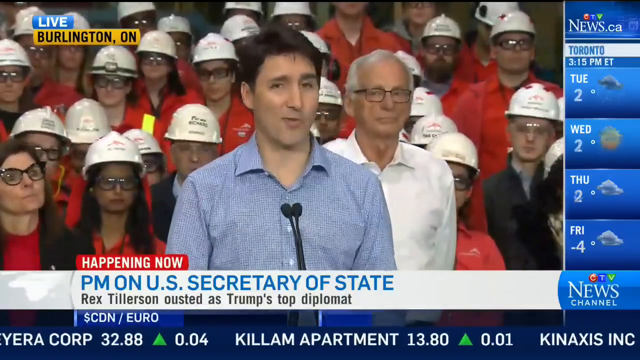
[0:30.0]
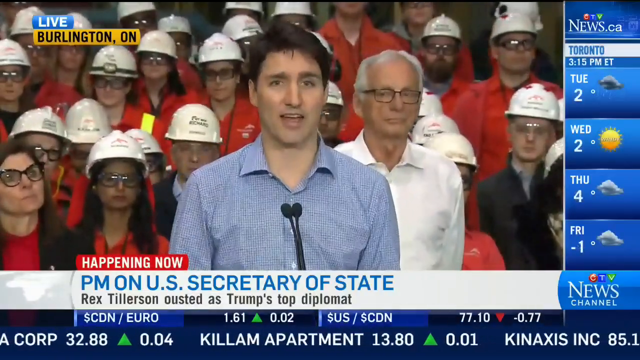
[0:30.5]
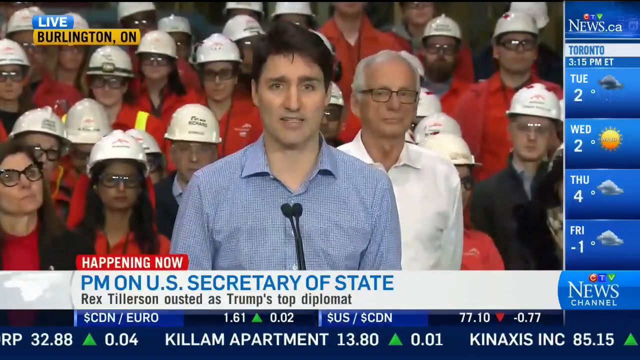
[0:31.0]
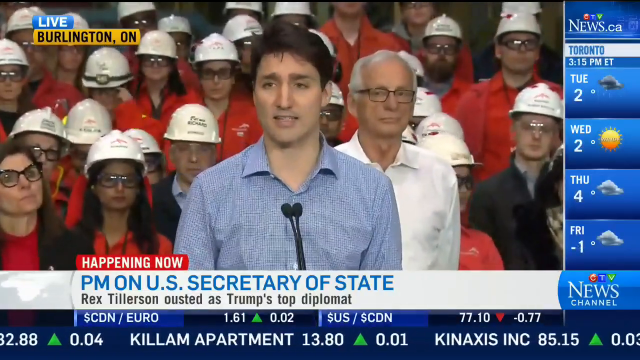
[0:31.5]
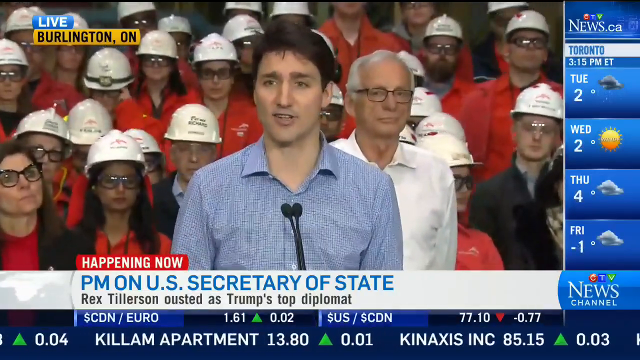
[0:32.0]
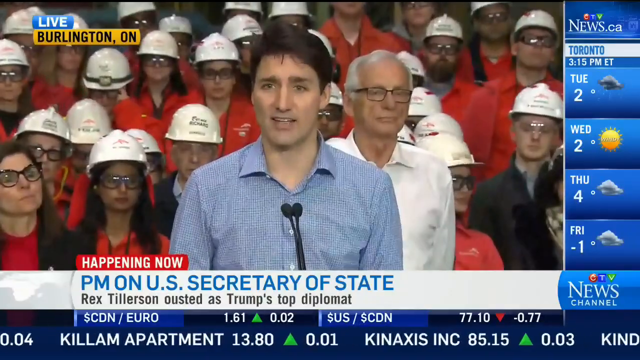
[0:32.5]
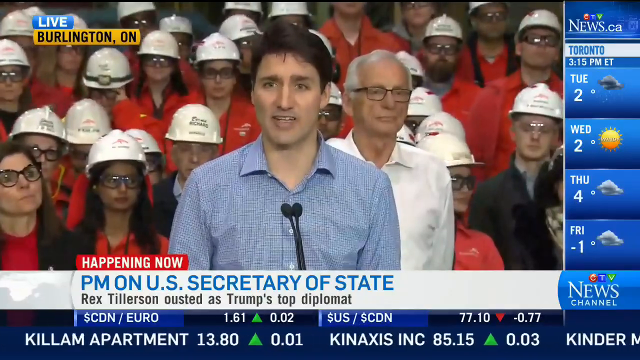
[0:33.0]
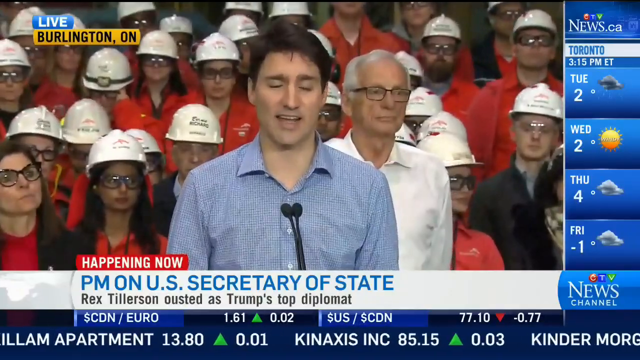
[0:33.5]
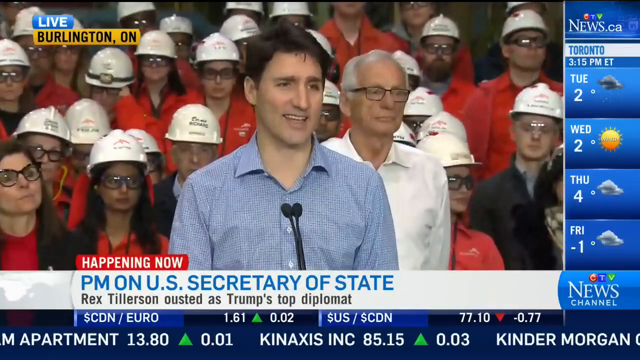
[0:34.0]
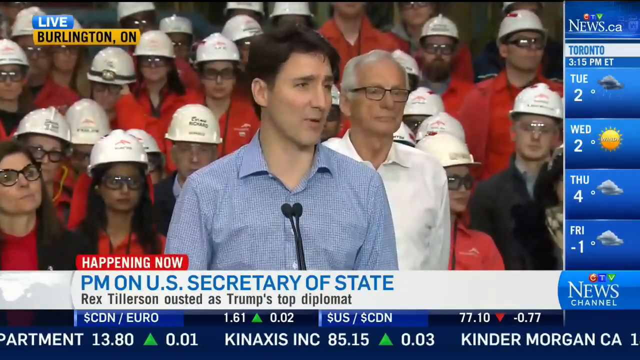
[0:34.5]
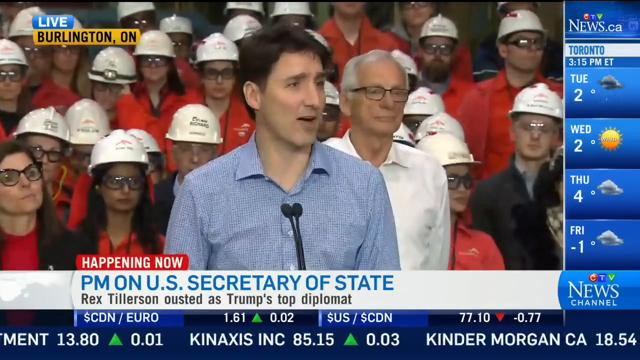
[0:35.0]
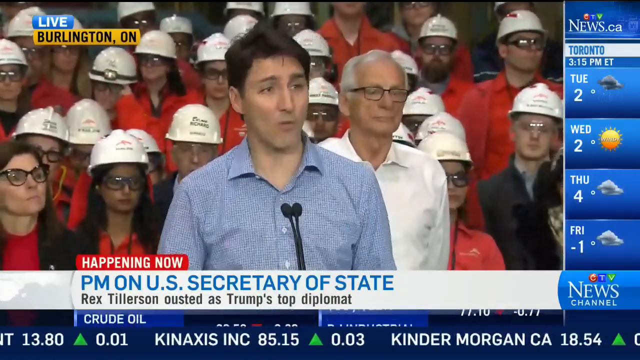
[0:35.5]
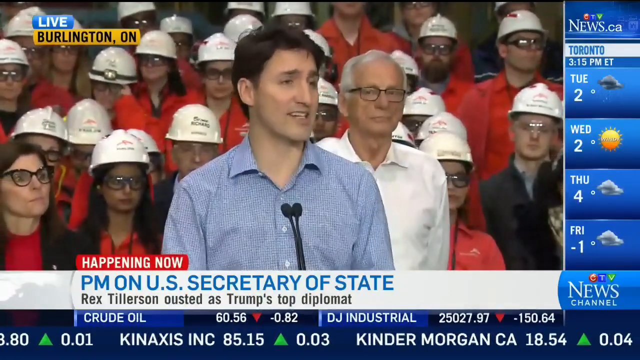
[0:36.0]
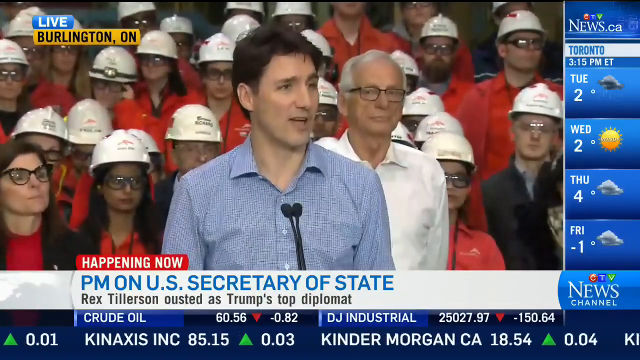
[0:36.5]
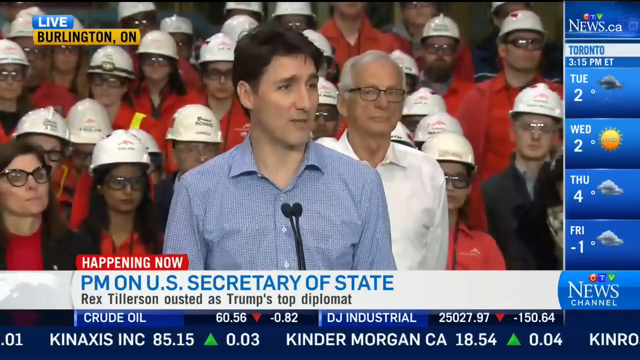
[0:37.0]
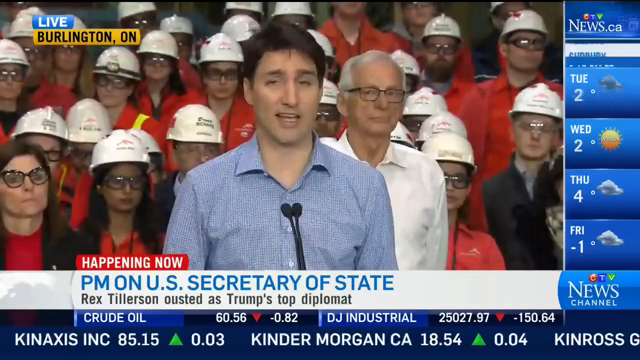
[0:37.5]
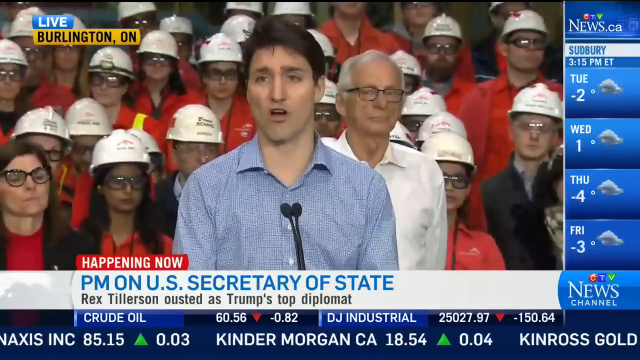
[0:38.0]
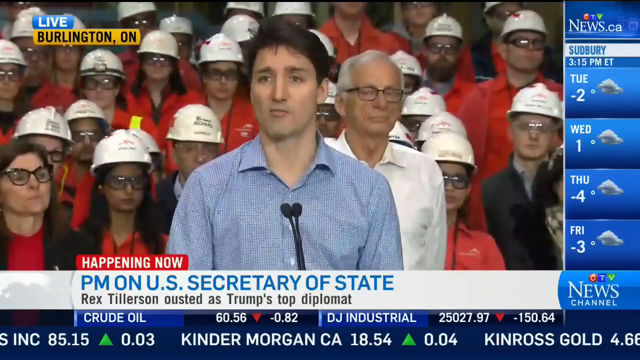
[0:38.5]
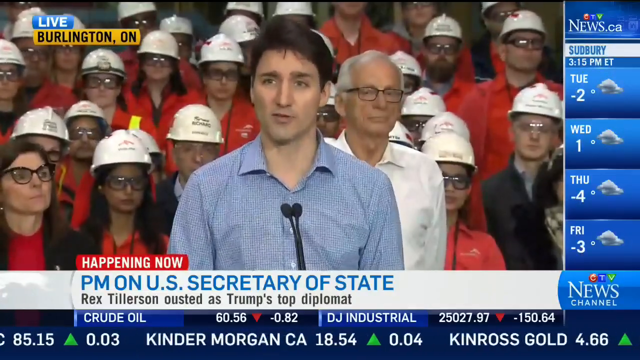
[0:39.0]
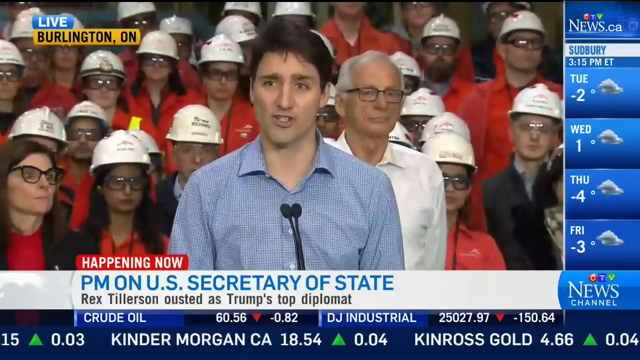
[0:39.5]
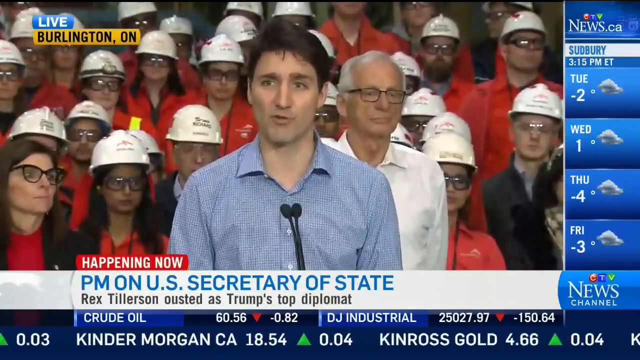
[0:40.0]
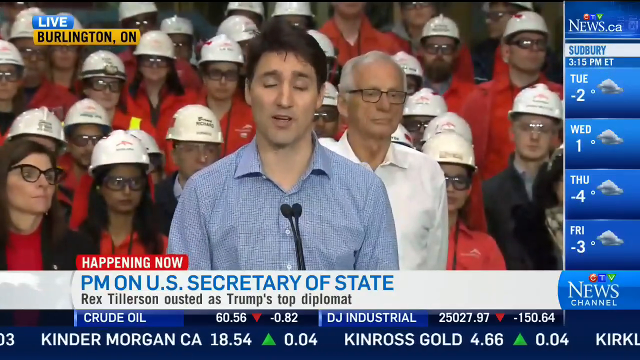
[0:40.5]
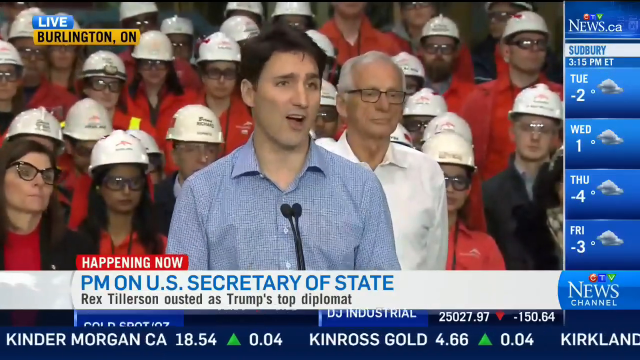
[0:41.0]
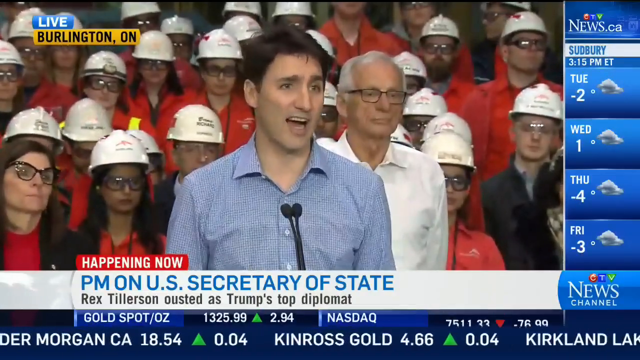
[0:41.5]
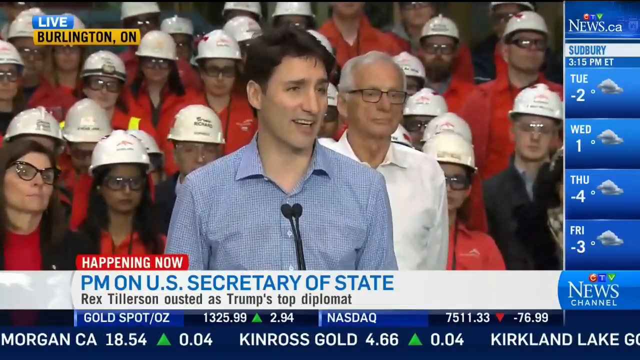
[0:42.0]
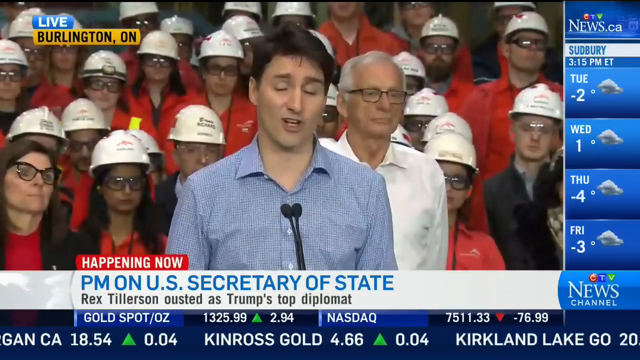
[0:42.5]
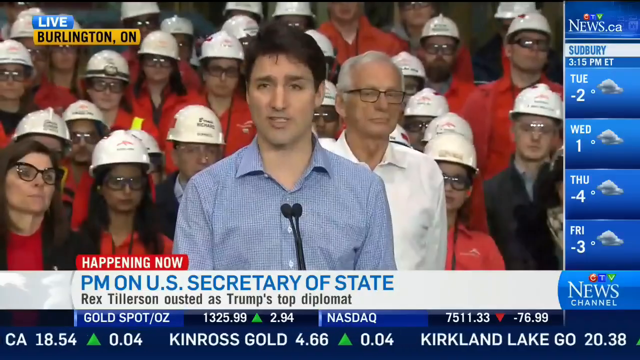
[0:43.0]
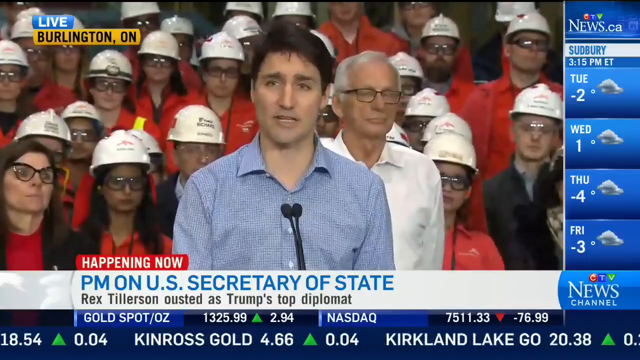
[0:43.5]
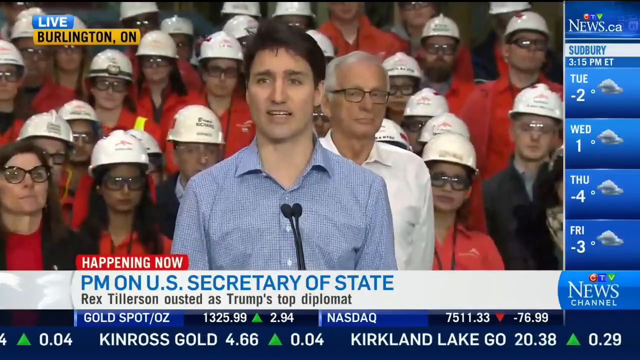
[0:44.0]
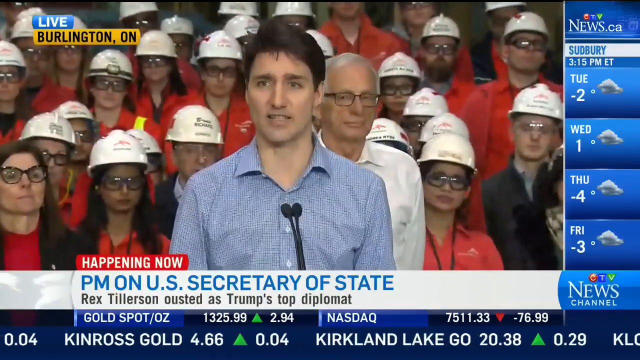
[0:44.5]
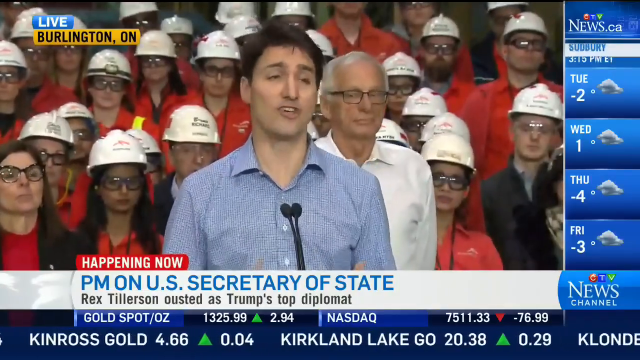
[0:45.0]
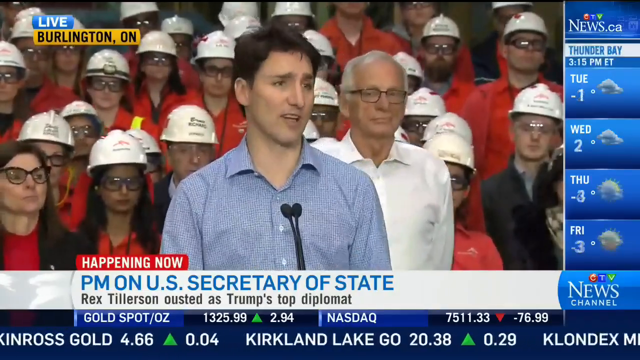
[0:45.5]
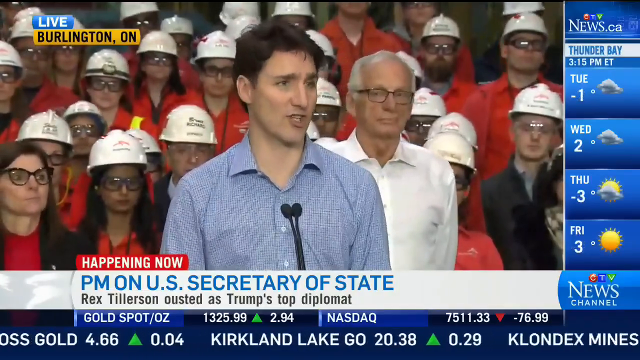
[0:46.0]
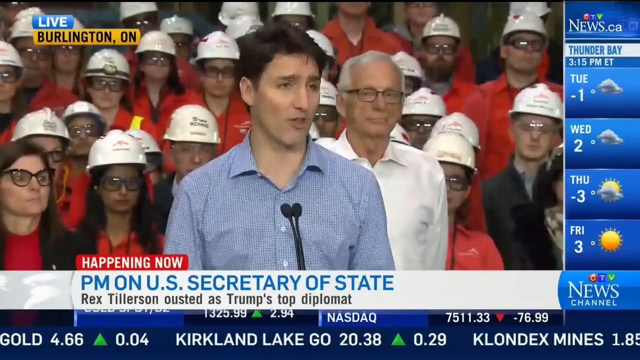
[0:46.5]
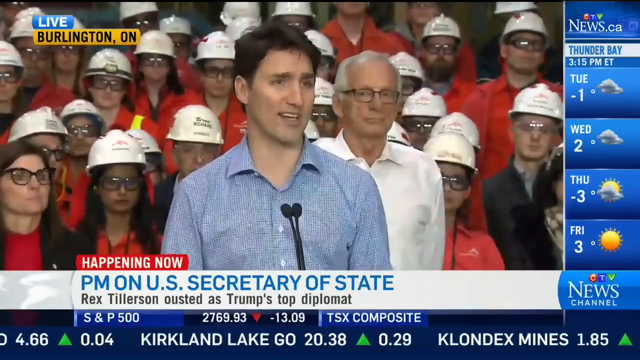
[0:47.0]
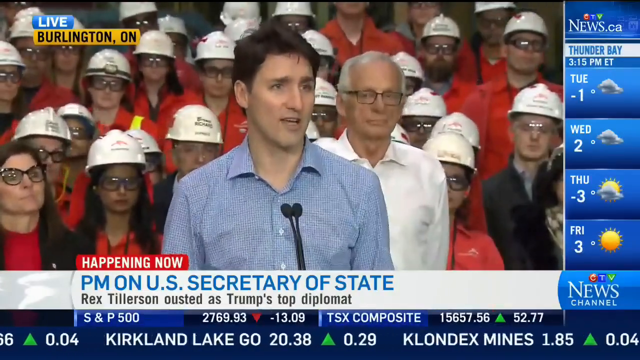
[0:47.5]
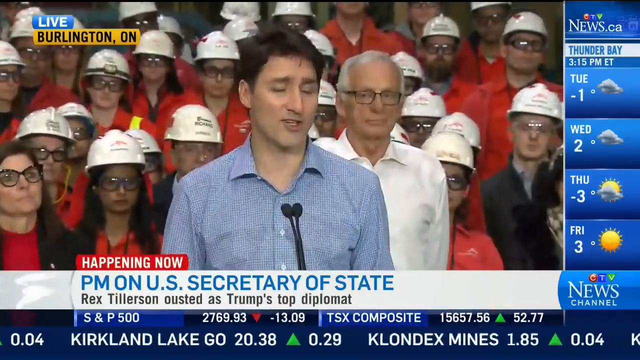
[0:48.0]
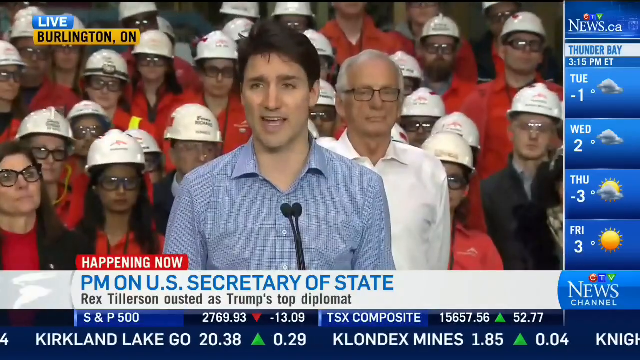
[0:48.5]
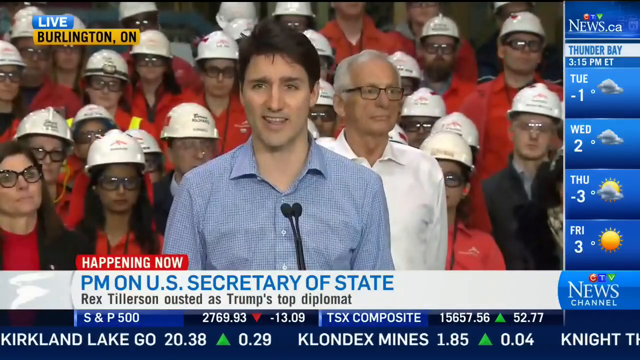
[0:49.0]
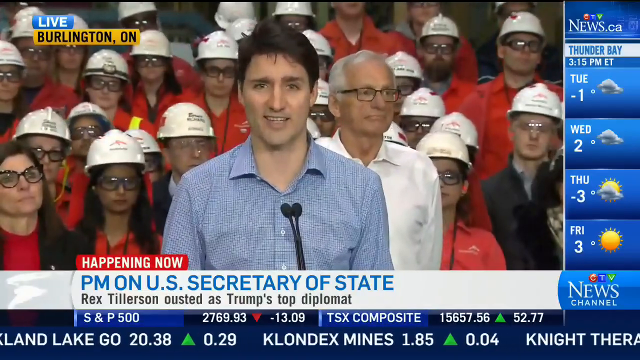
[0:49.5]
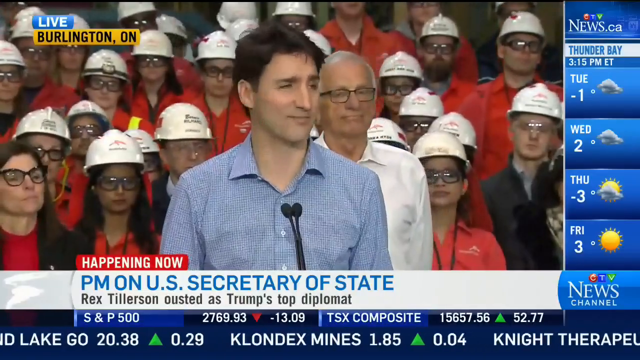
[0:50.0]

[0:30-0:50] The person in front is still talking, and the workers behind him nod their heads, apparently in agreement. The weather on the right side shows Thunder Bay: Tuesday minus 1 degrees, Wednesday 2 degrees, Thursday minus 3 degrees, Friday 3 degrees. This is the CCTV News Channel. As the man keeps talking, flashes go off, possibly from reporters taking pictures and videos of the event. The weather for Montreal is also shown: Tuesday 1 degree, Wednesday 1 degree, Thursday 2 degrees, Friday minus 3 degrees. The workers stand in the background wearing mostly red and black. Their helmets are all white with a red and black sticker on the front, except for the one helmet with a light mounted on it.